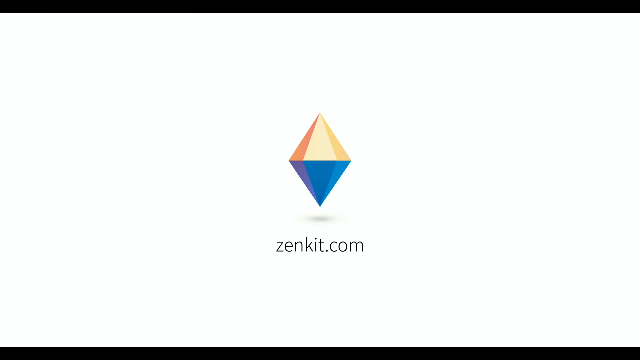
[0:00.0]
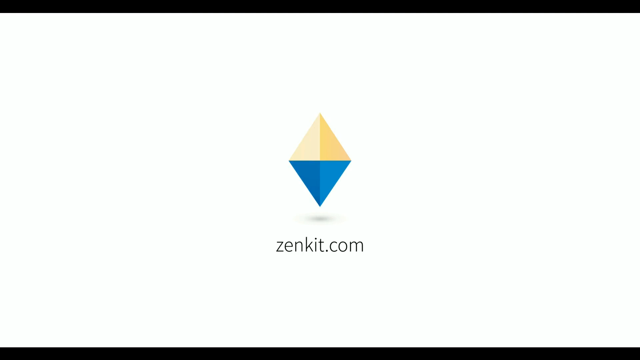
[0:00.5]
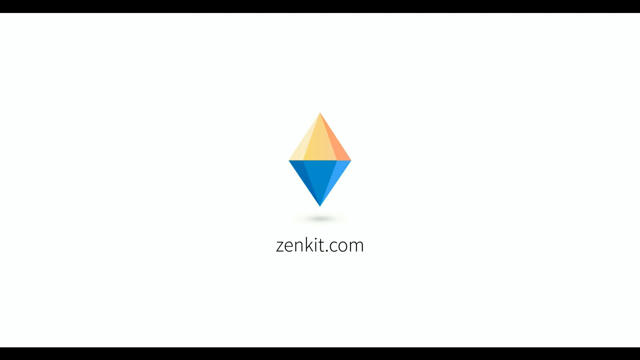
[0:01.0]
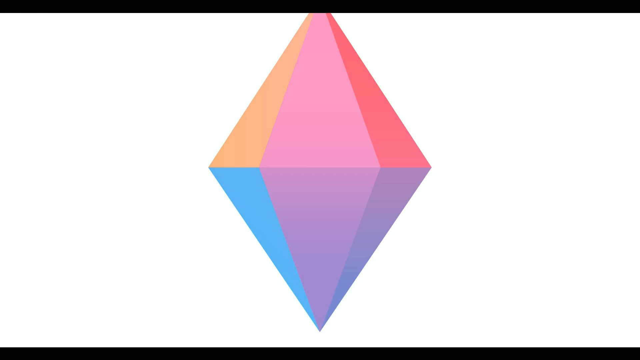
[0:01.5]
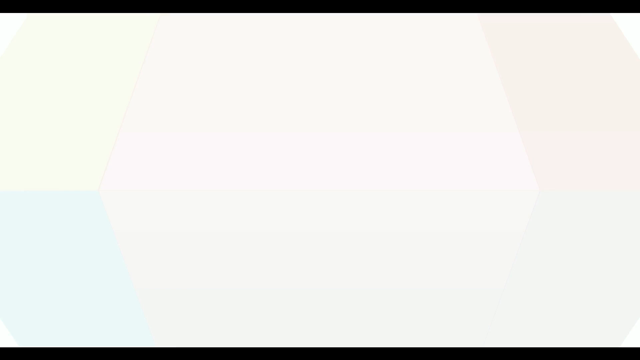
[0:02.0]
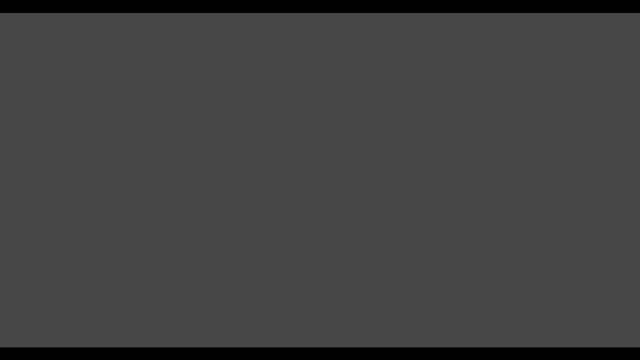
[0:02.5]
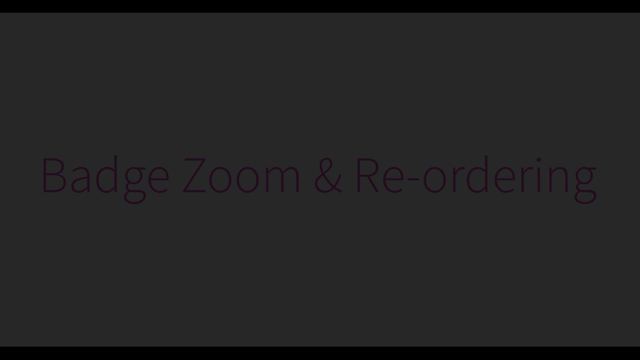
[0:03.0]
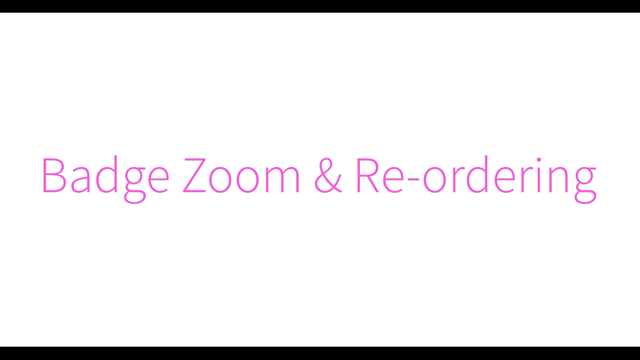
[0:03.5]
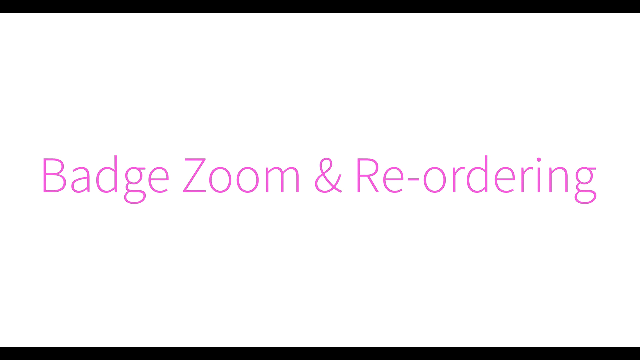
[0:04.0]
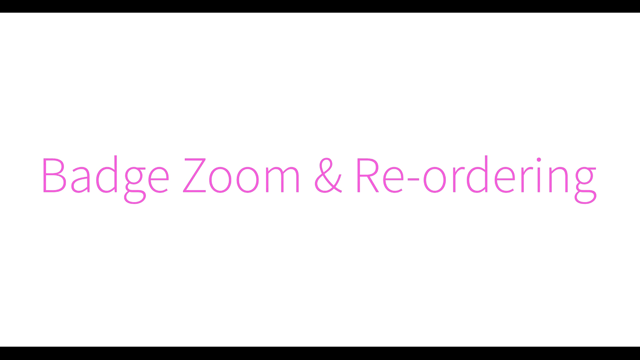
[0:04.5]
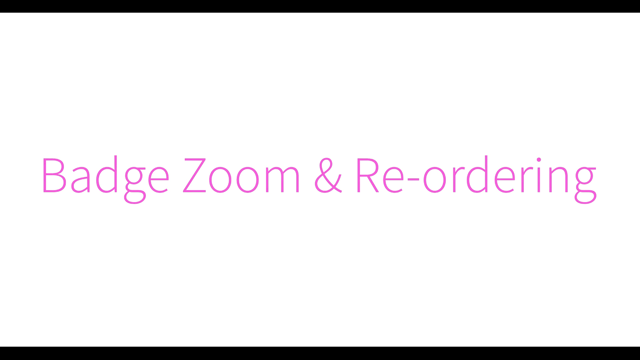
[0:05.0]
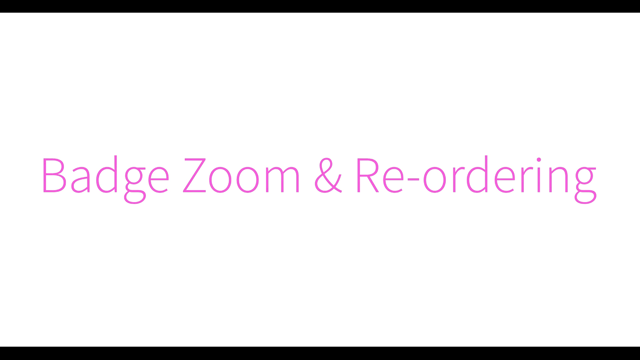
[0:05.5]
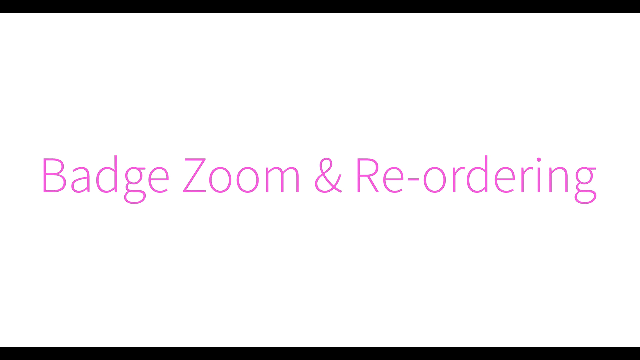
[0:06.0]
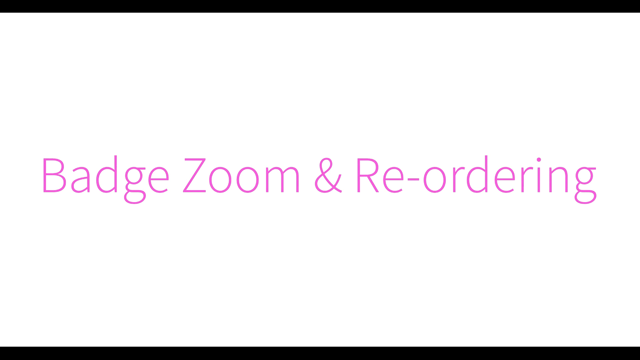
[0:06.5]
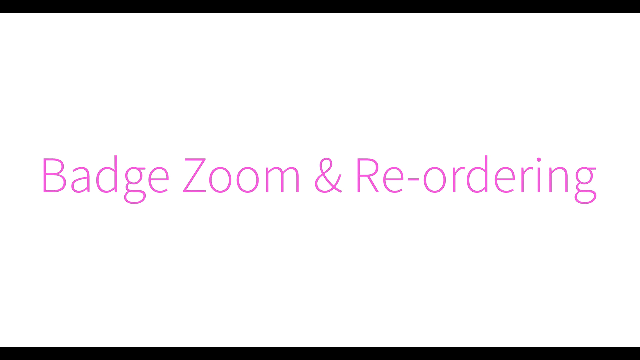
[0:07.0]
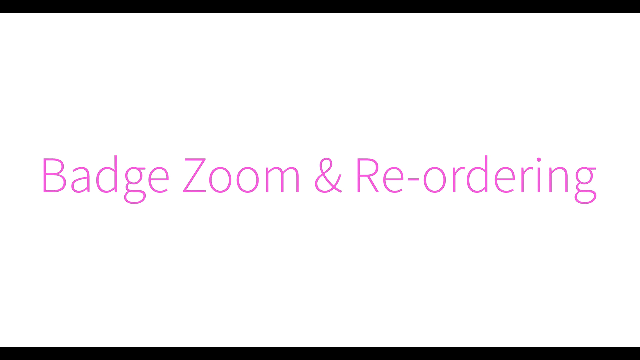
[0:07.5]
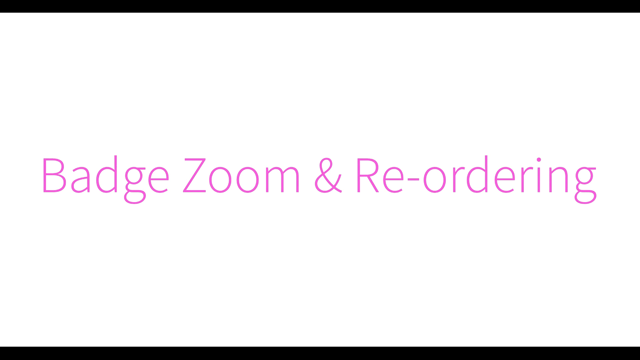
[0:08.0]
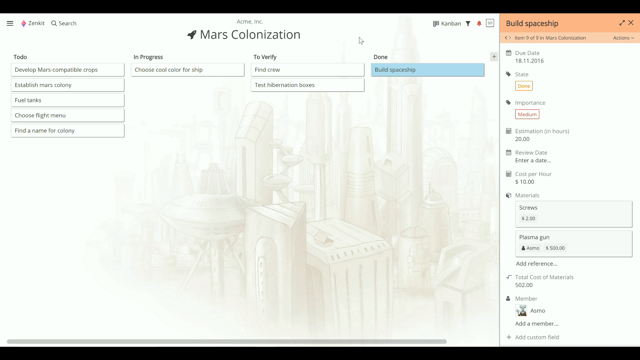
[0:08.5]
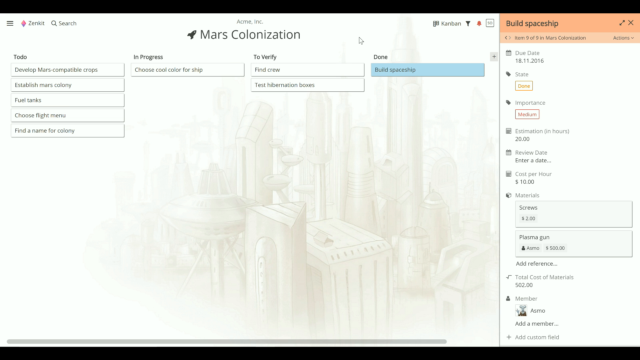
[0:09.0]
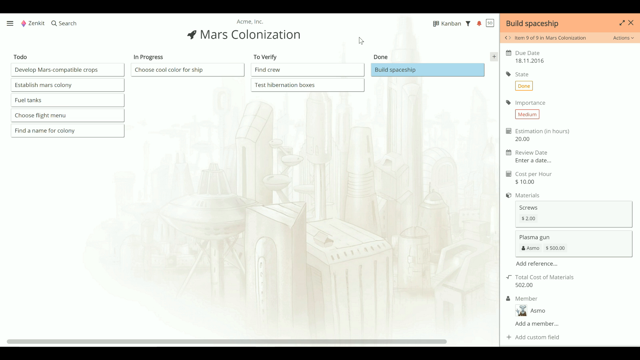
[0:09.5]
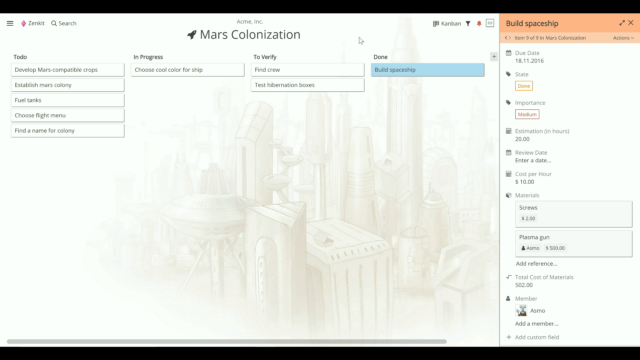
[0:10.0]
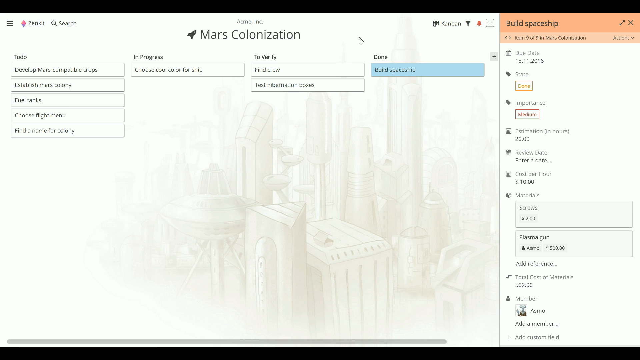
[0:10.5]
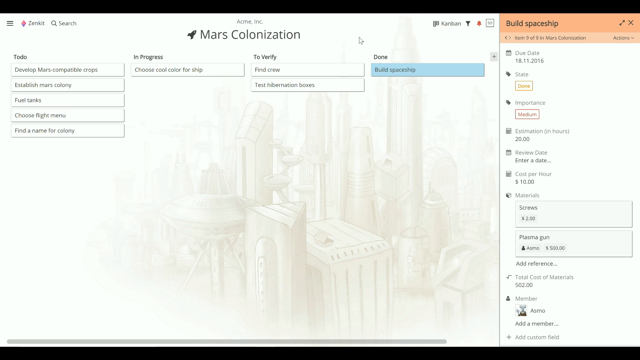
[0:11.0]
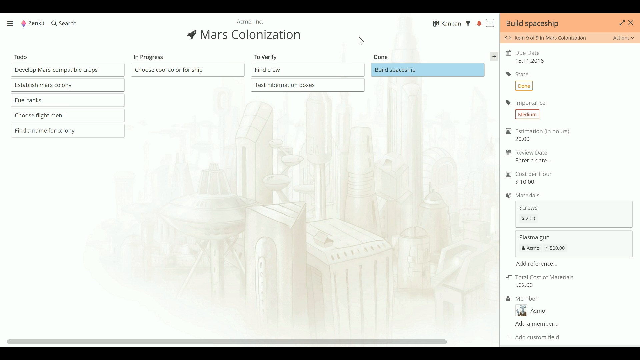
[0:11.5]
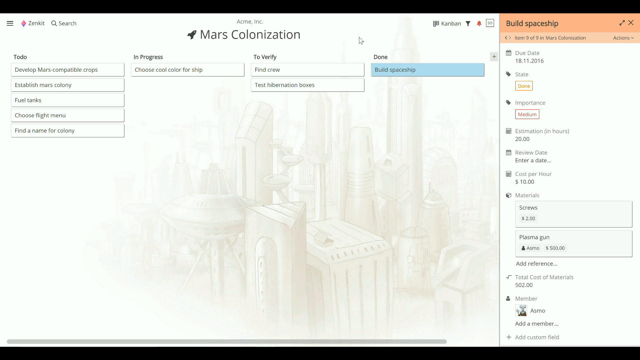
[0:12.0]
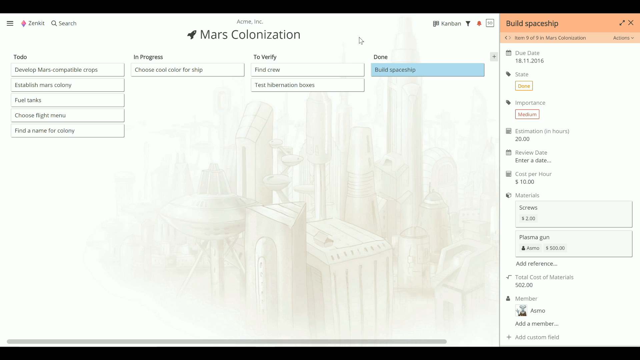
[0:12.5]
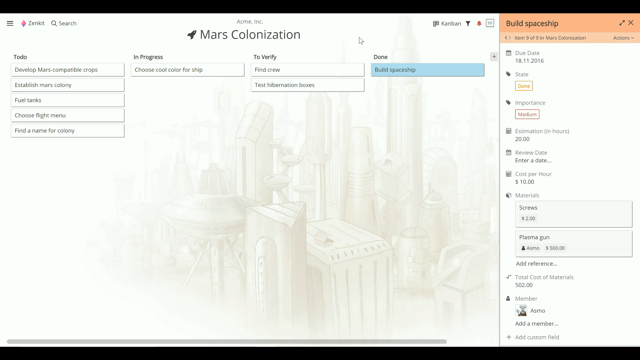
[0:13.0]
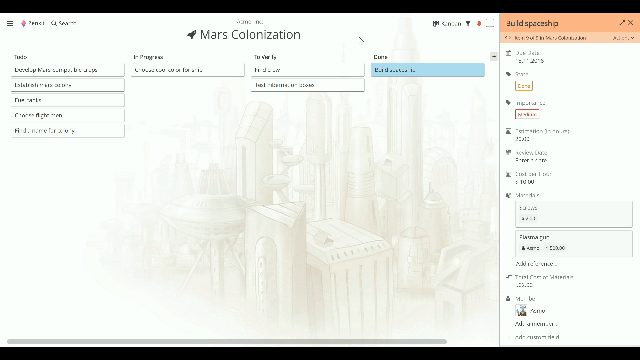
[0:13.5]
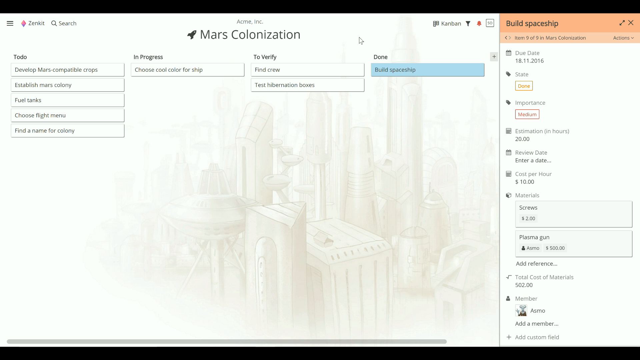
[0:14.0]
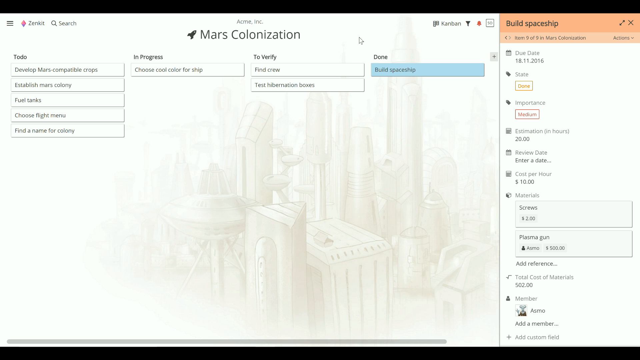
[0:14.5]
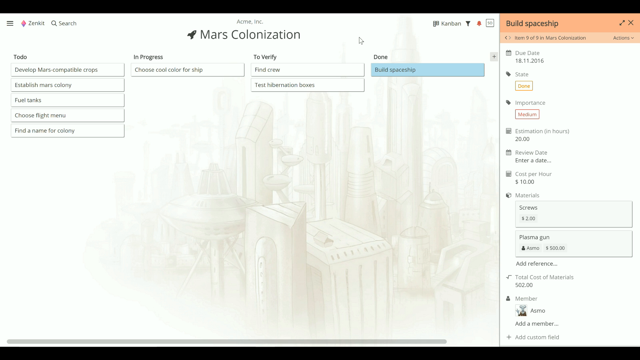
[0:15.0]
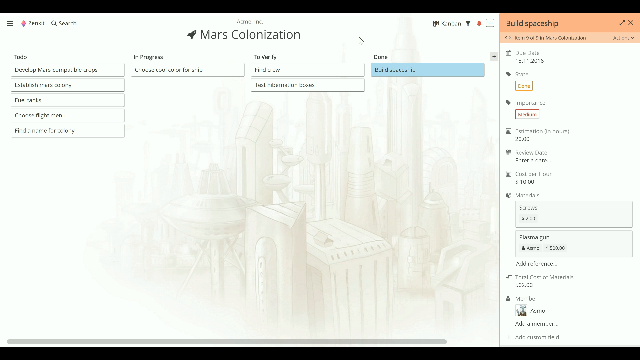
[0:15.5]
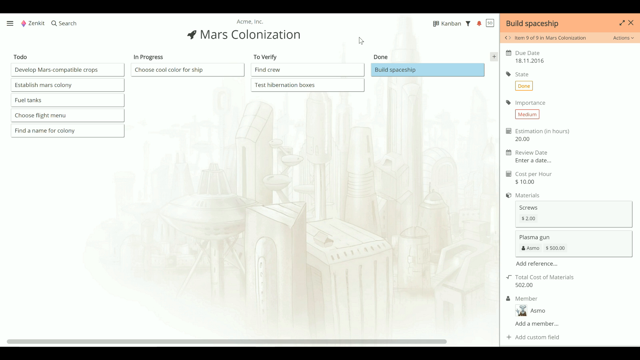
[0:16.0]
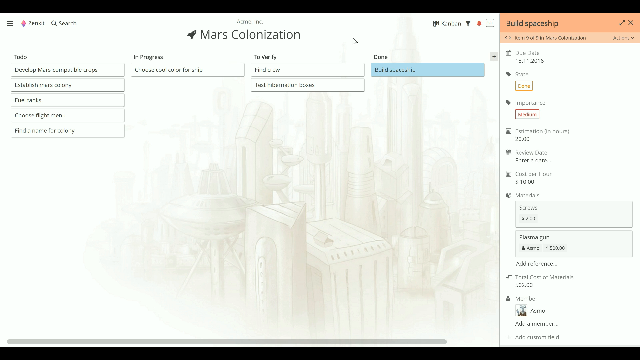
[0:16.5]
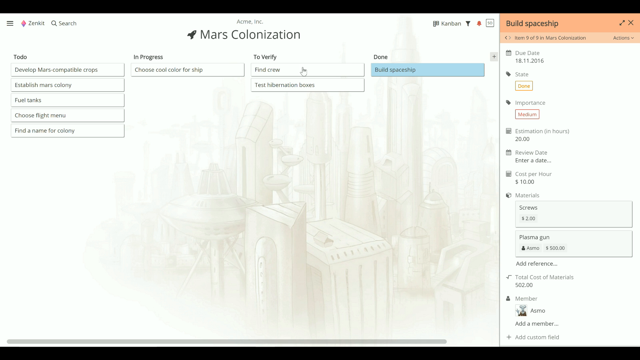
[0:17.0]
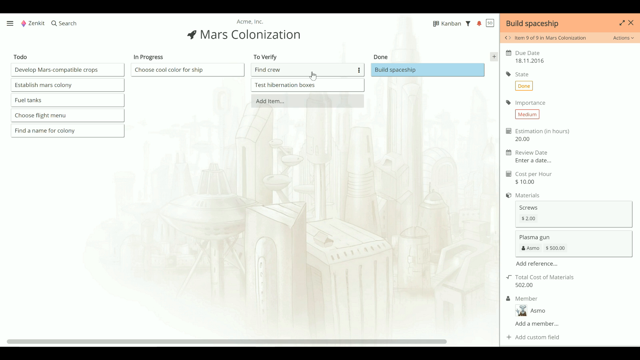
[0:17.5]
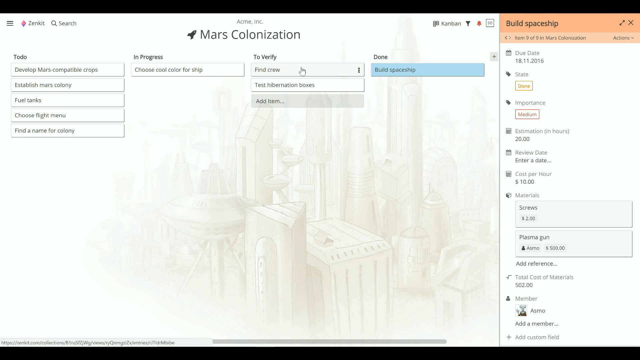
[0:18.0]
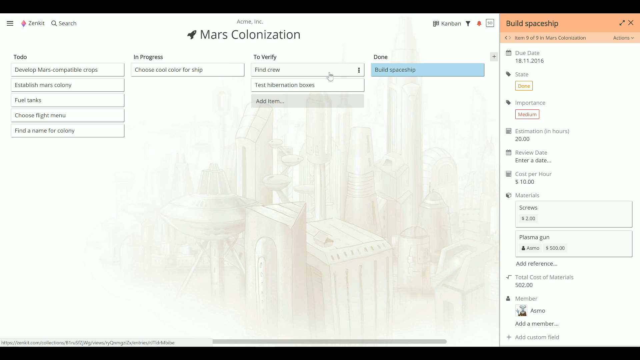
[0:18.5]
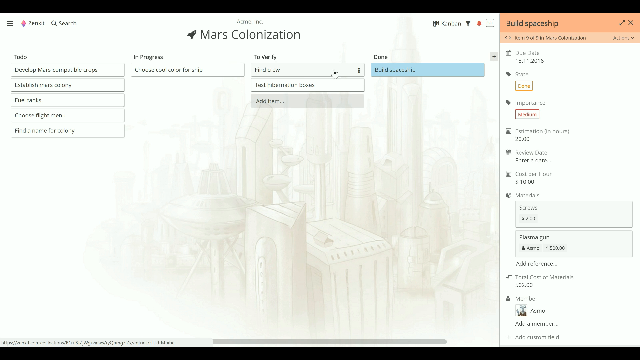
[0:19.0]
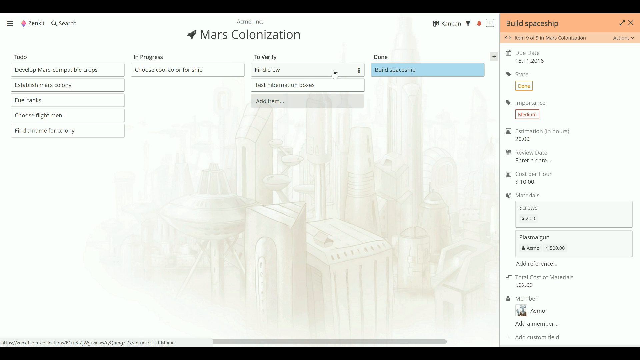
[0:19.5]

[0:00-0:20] A predominantly white screen appears with a multicoloured spinning diamond shape in the centre. The diamond's colours are mainly yellow and blue at first, then become more red. Underneath the diamond is a shadow showing it slightly hovering above the surface, along with the words "zenkit.com" in black. The diamond then zooms up towards the viewer until it takes up the entire screen, which turns white, fades to black, and fades to white again. Large pink lettering appears on screen reading "Badge zoom and reordering". The shot holds for several seconds before cutting to a screen with a predominantly white background and a very faint illustration of an industrial futuristic city backdrop. At the top of the screen, black text reads "Mars colonisation". Underneath is a series of tabs that can be selected, and to the right is a separate plain white panel with an orange strip at the top bearing the black text "build spaceship". A cursor moves to one of the drop-down tabs in the centre of the screen.